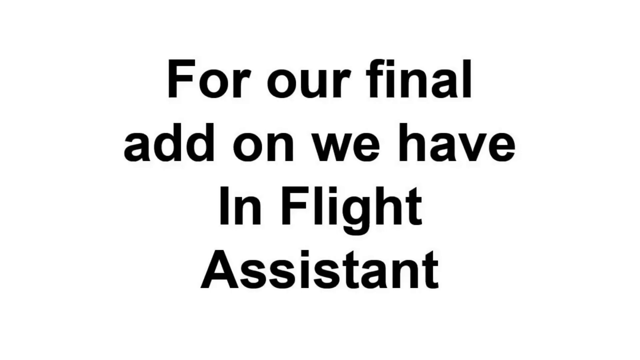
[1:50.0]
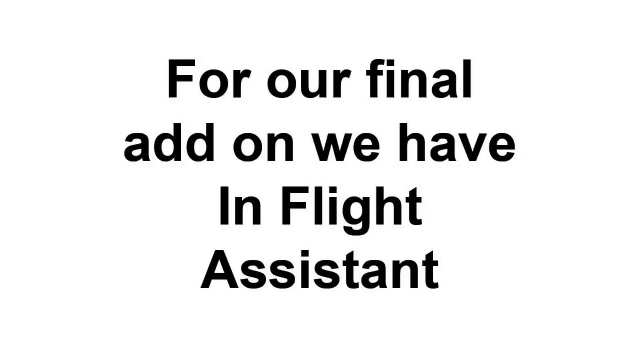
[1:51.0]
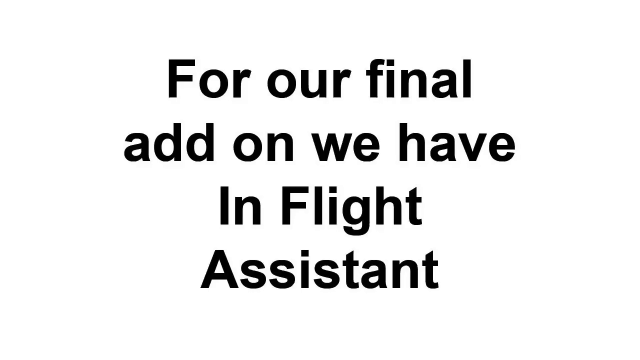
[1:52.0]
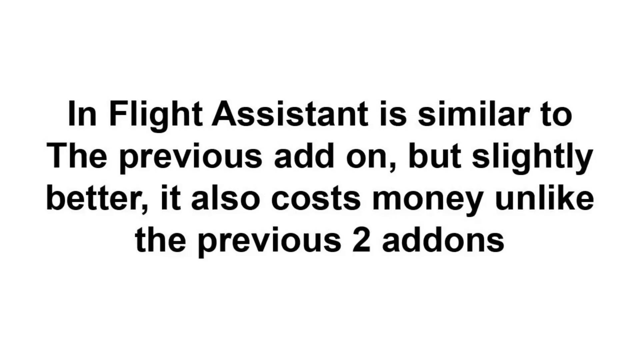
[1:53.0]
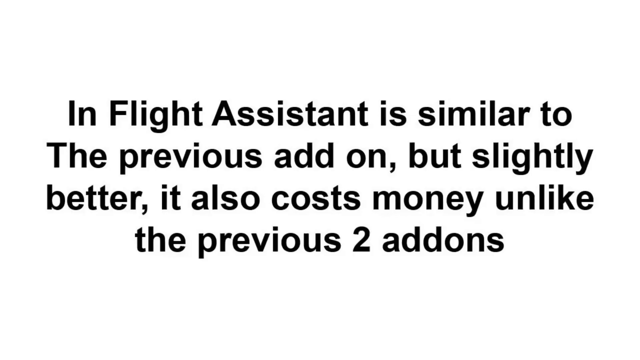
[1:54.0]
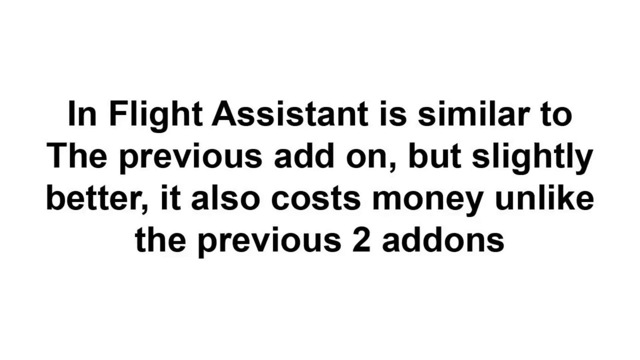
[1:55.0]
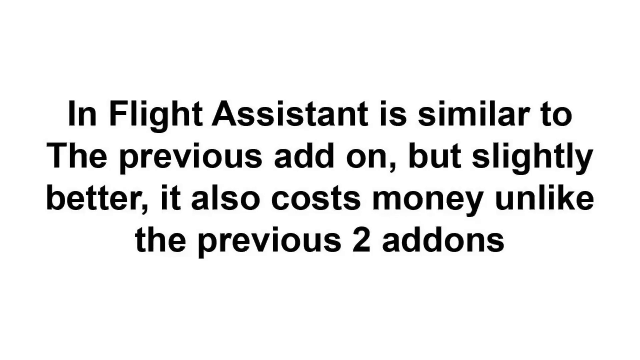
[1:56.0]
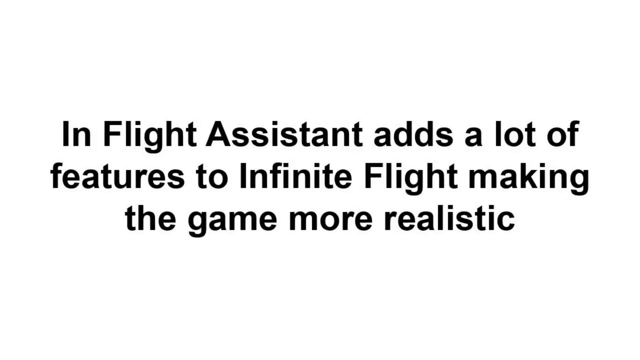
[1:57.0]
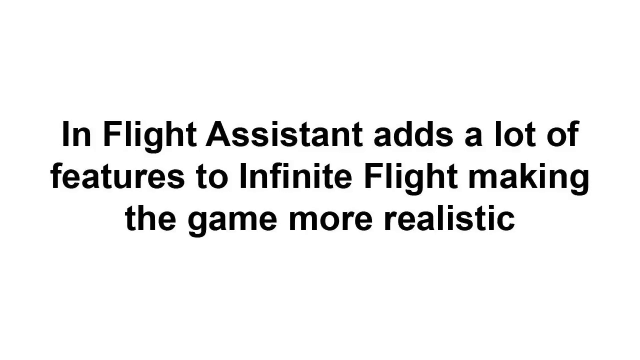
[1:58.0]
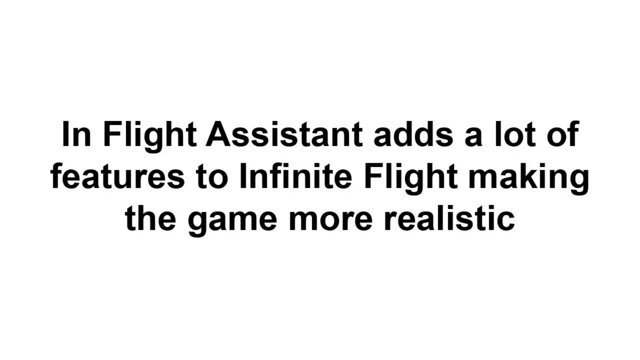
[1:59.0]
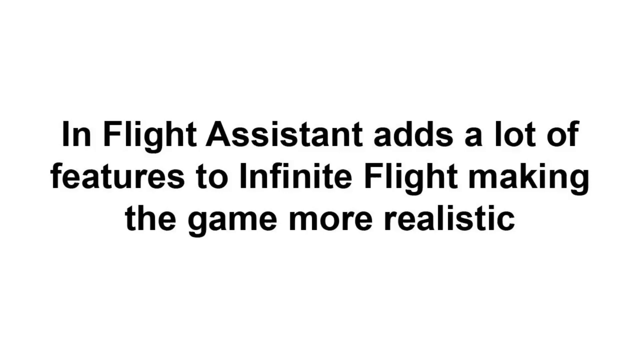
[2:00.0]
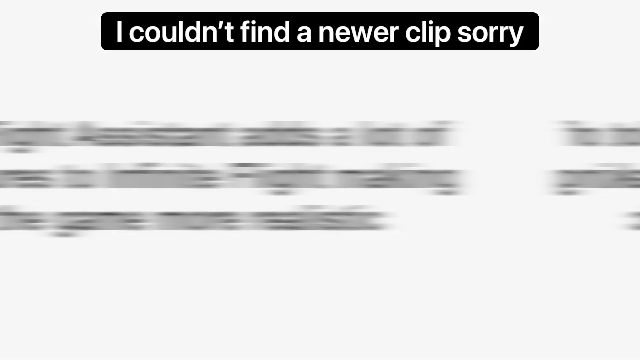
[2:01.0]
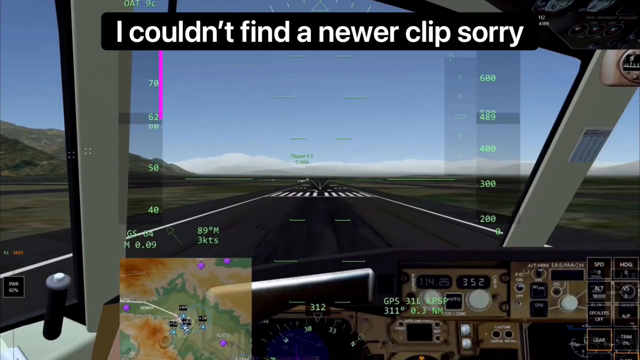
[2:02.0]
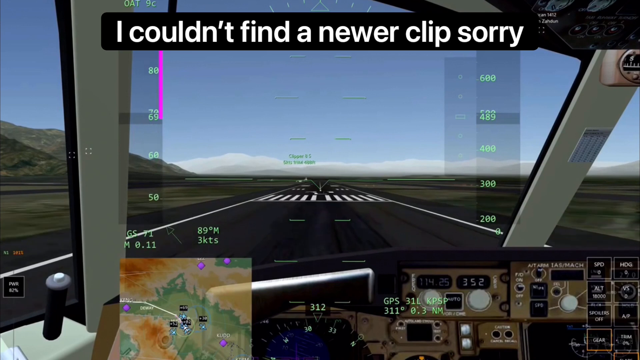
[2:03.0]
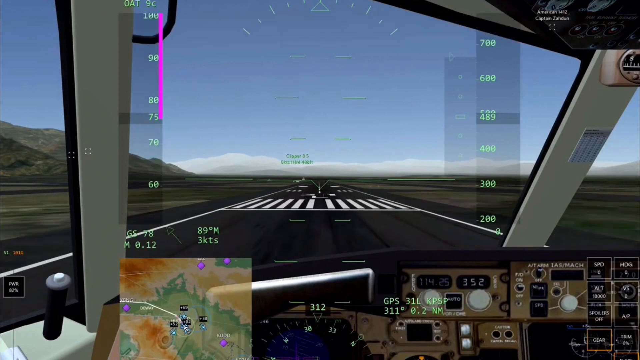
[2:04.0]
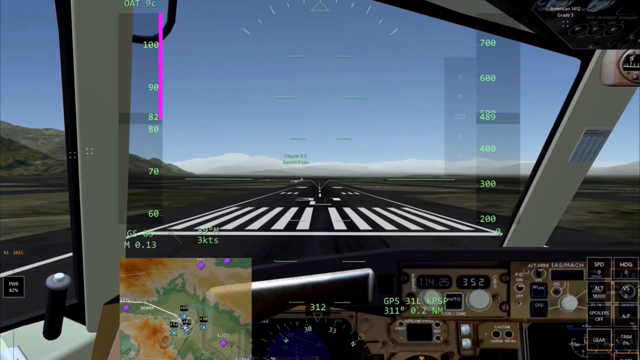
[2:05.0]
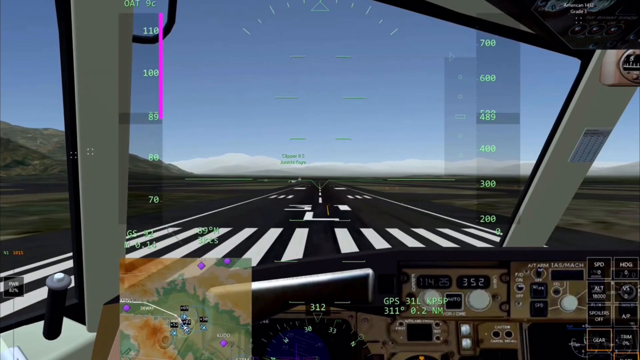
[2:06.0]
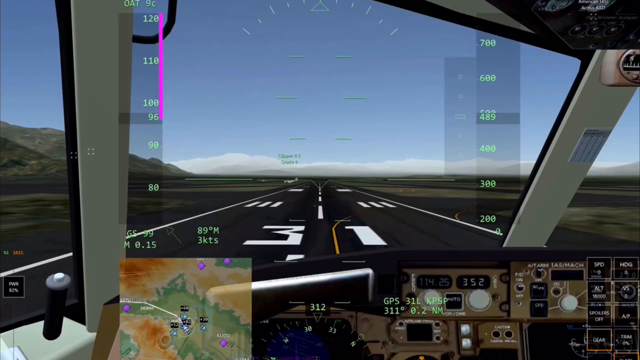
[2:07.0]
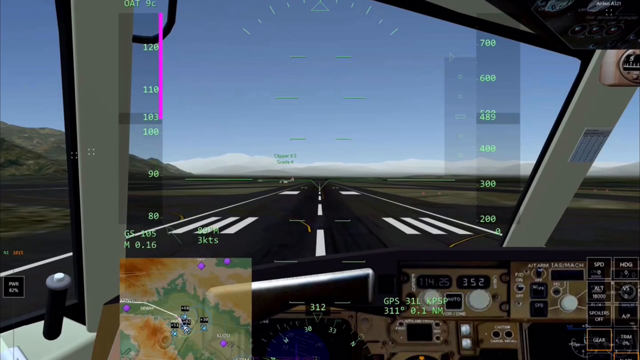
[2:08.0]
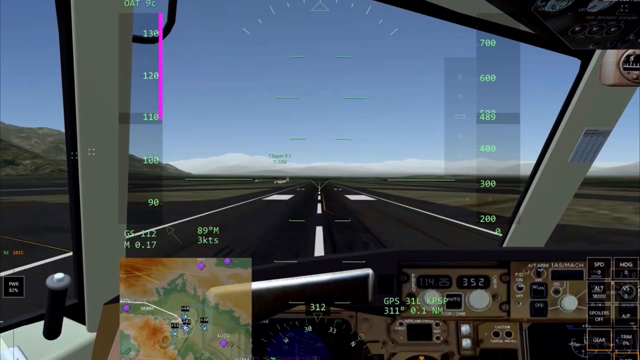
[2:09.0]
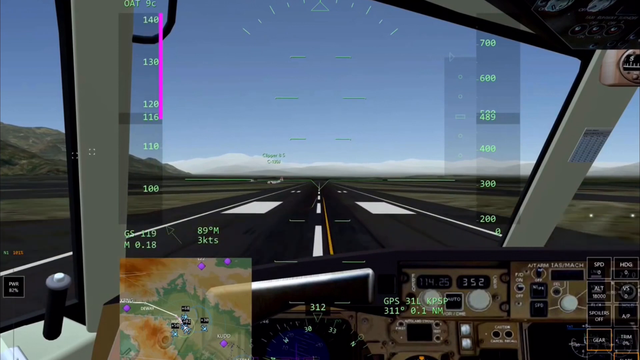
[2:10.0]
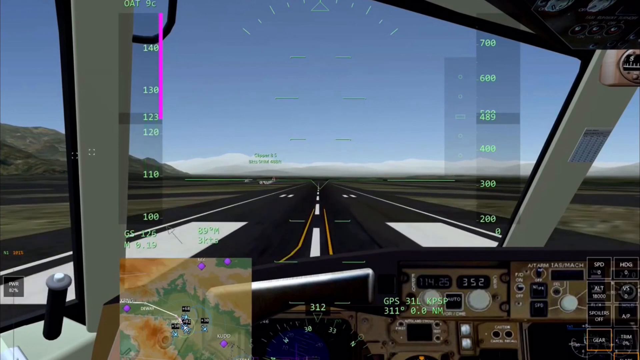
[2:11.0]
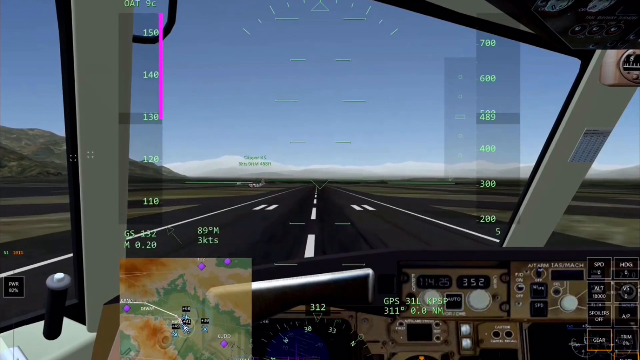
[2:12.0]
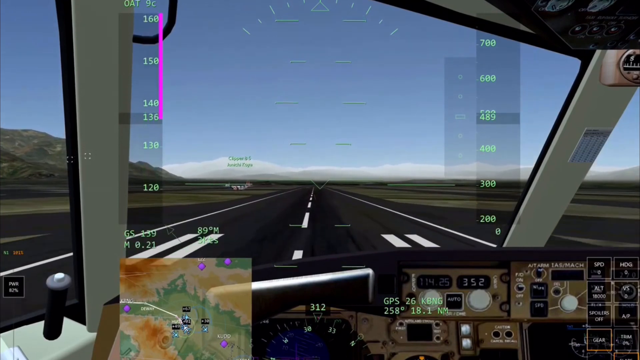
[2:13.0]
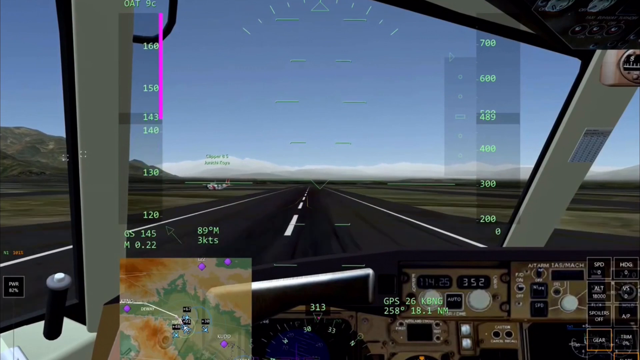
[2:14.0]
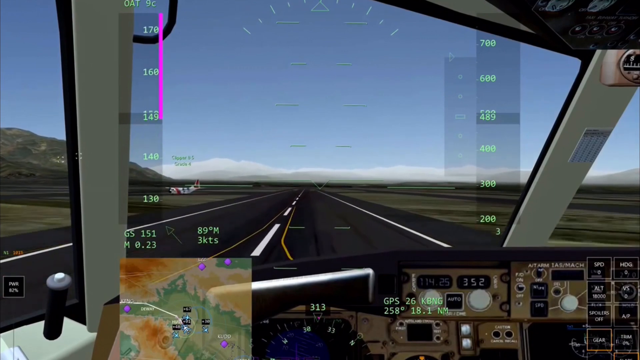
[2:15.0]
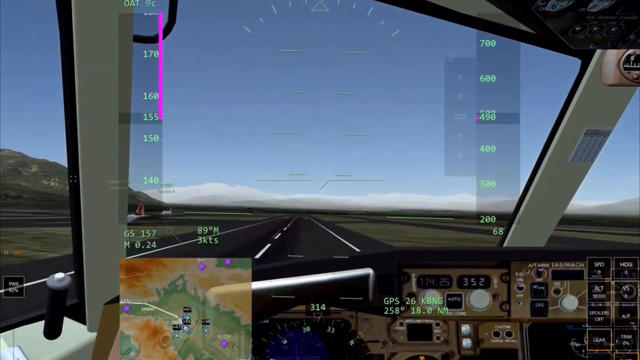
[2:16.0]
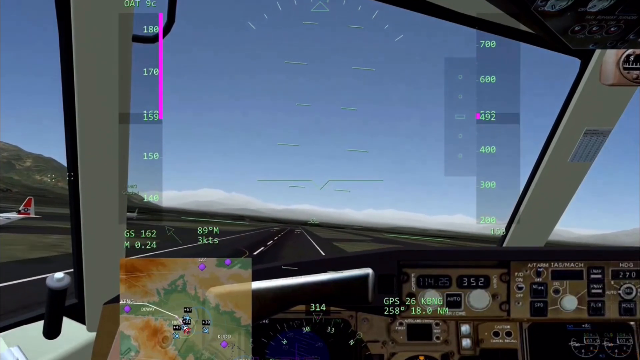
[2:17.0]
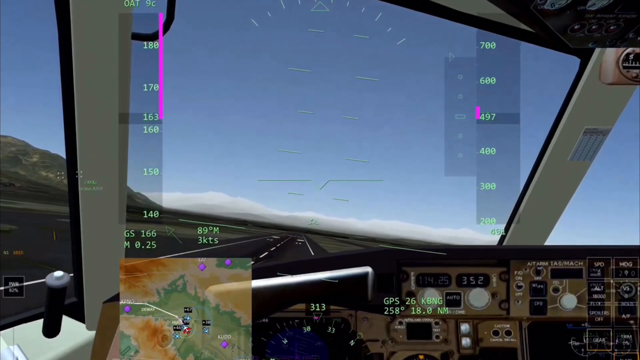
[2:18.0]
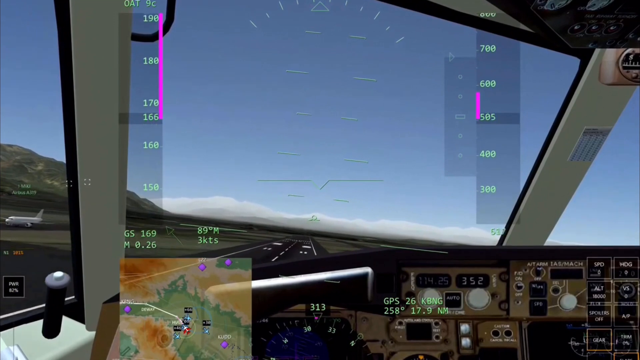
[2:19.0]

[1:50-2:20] Text on the screen reads "for our final add-on, we have In-Flight Assistant." More text follows: "In-Flight Assistant is similar to the previous add-on, but slightly better. It also costs money, unlike the previous two add-ons." and "In-Flight Assistant adds a lot of features to Infinite Flight, making the game more realistic." A scene then depicts the app with the add-on running, with text at the top that says "I couldn't find a newer clip." An aircraft taxis down the runway and appears to take off; the nose lifts into the air and the runway below becomes smaller as the aircraft climbs.